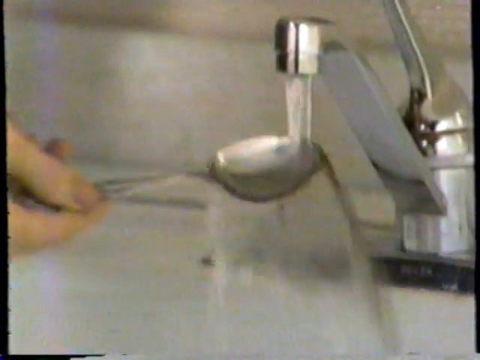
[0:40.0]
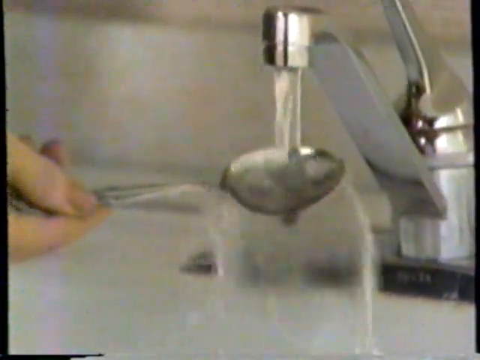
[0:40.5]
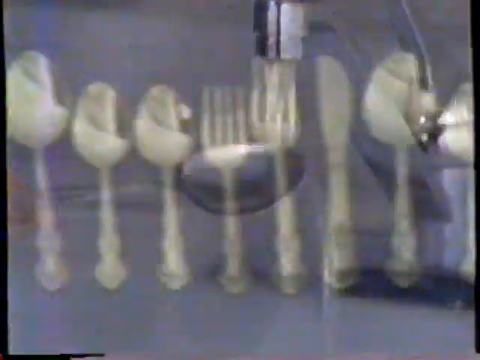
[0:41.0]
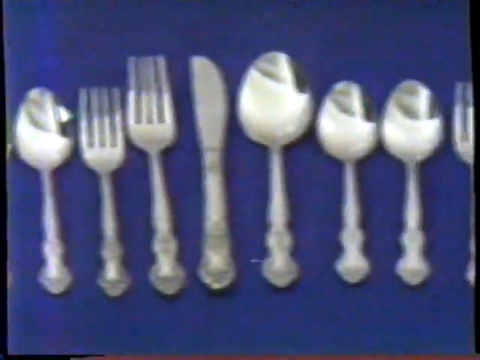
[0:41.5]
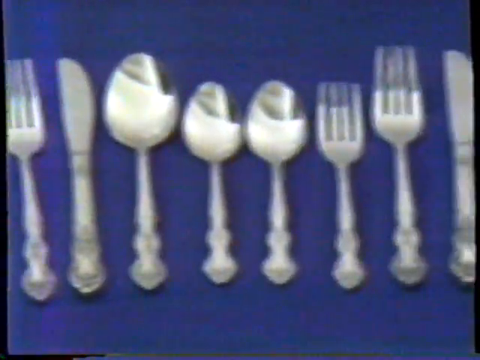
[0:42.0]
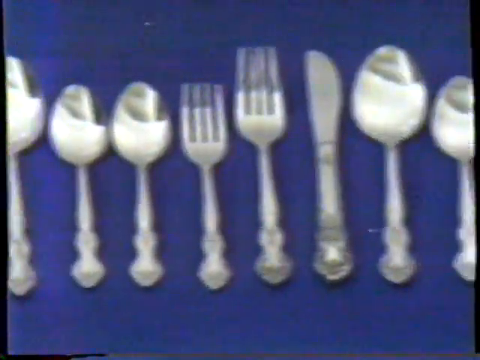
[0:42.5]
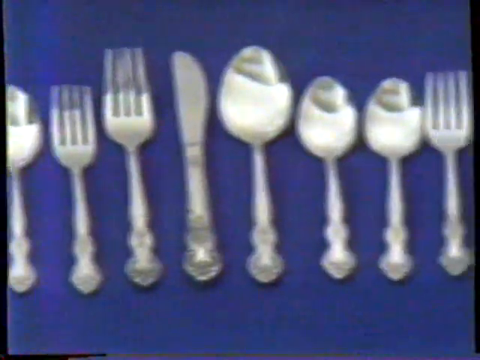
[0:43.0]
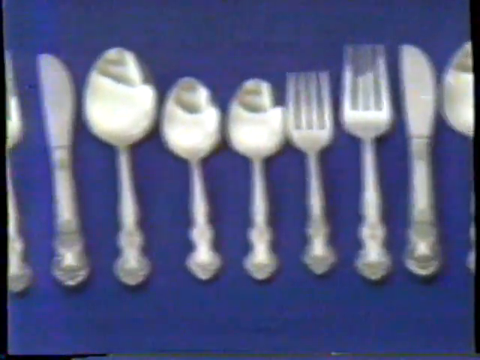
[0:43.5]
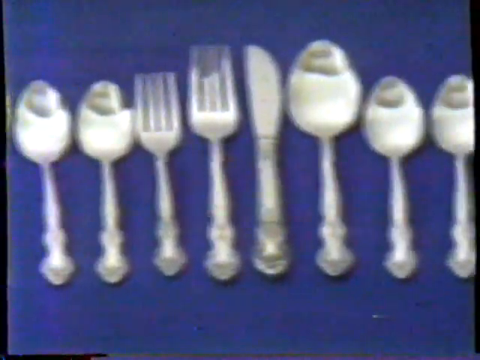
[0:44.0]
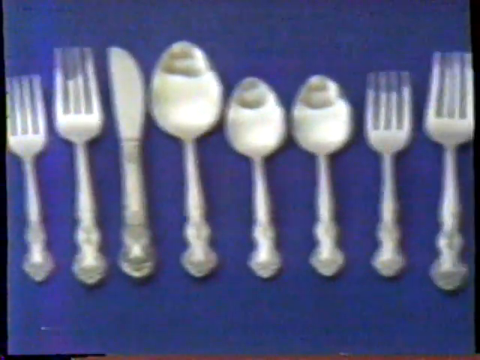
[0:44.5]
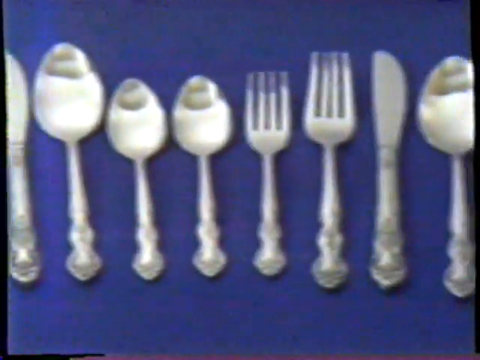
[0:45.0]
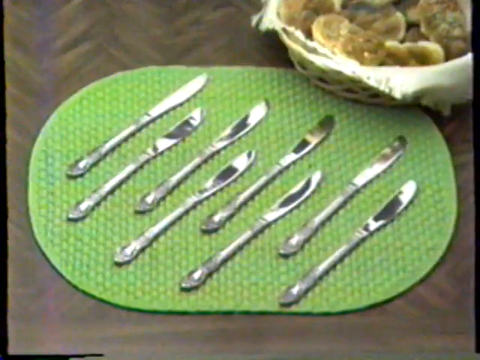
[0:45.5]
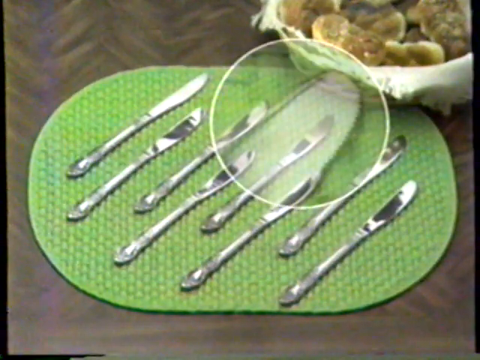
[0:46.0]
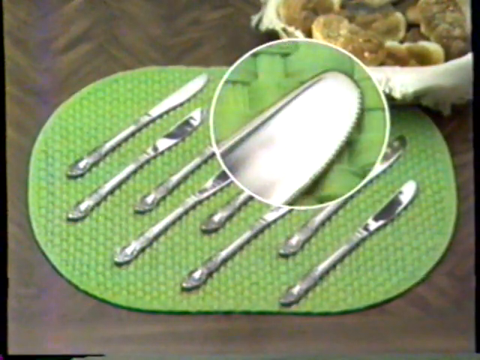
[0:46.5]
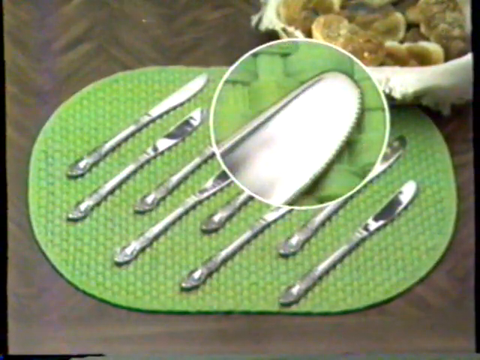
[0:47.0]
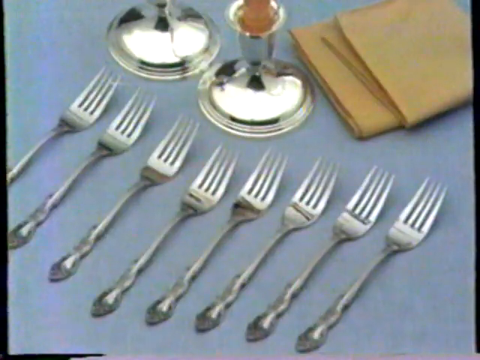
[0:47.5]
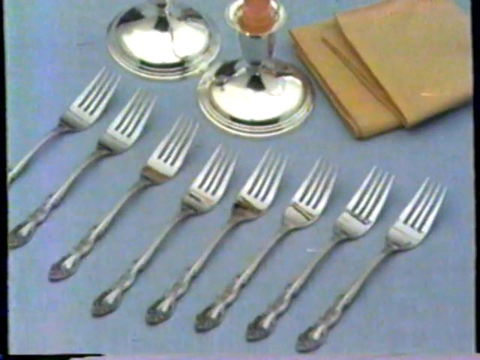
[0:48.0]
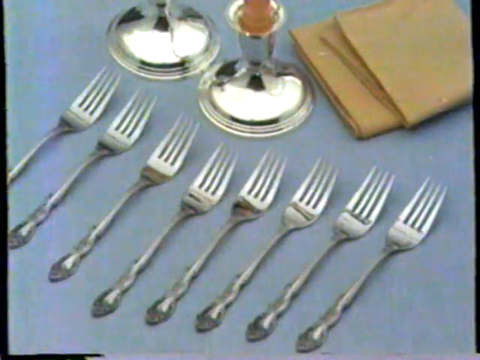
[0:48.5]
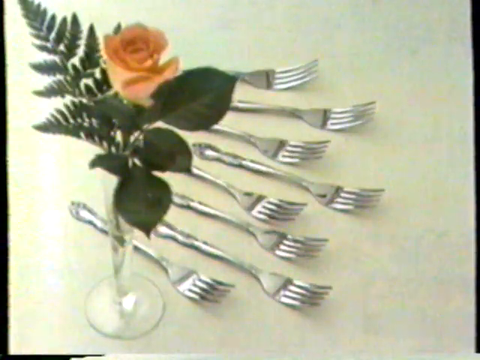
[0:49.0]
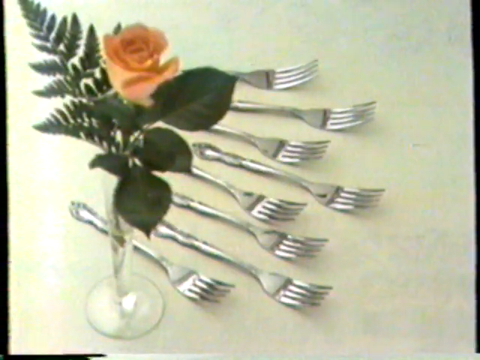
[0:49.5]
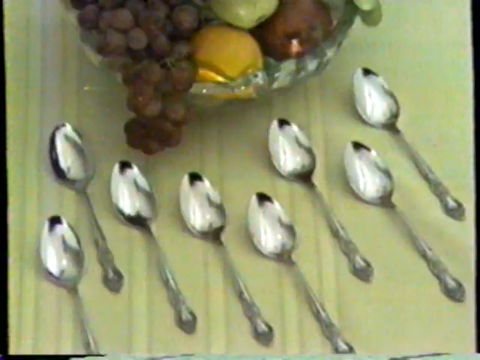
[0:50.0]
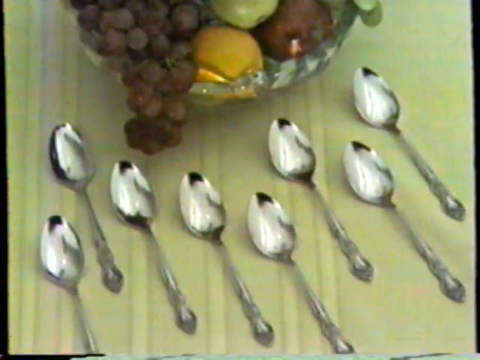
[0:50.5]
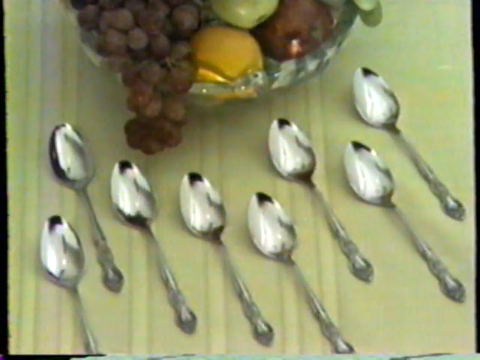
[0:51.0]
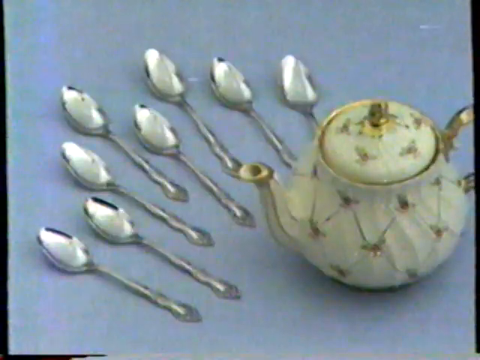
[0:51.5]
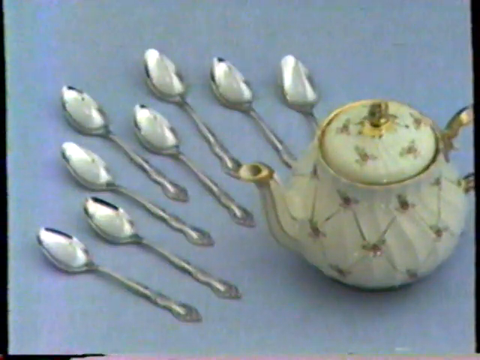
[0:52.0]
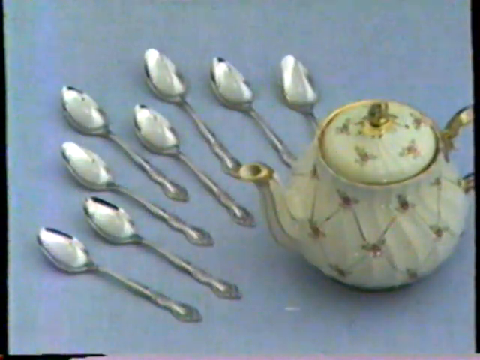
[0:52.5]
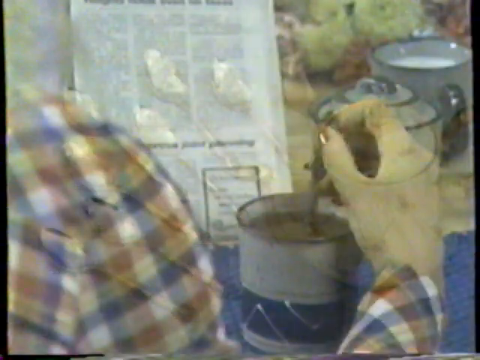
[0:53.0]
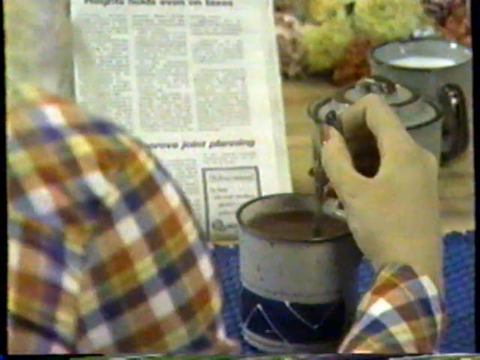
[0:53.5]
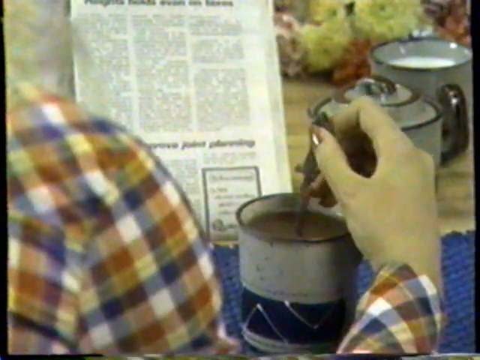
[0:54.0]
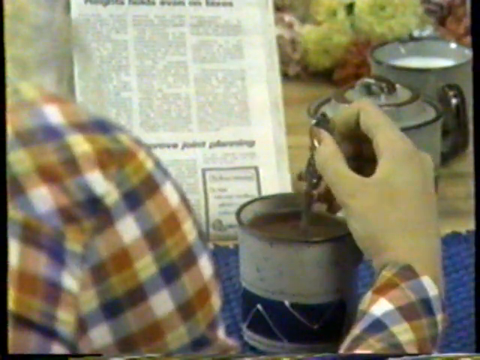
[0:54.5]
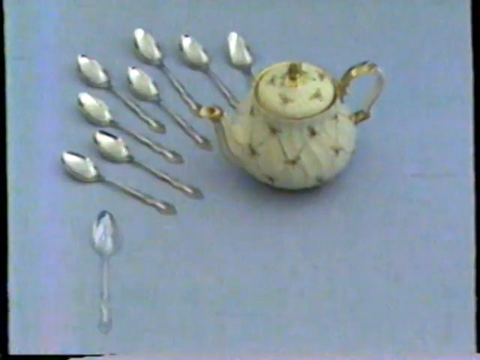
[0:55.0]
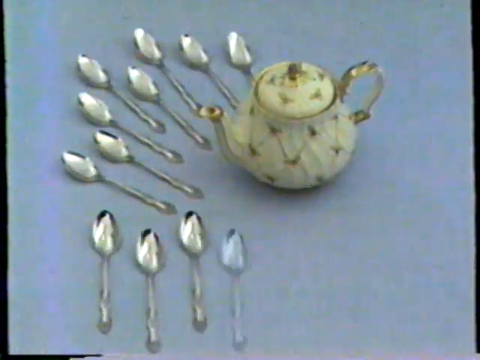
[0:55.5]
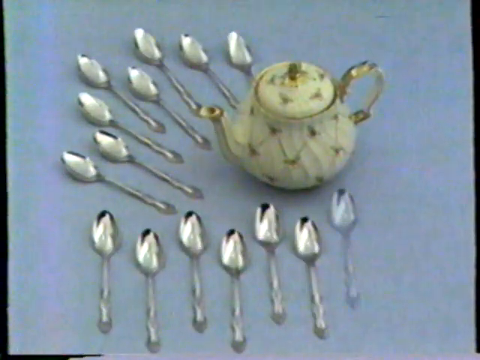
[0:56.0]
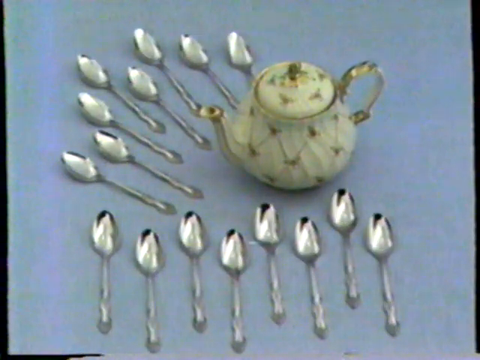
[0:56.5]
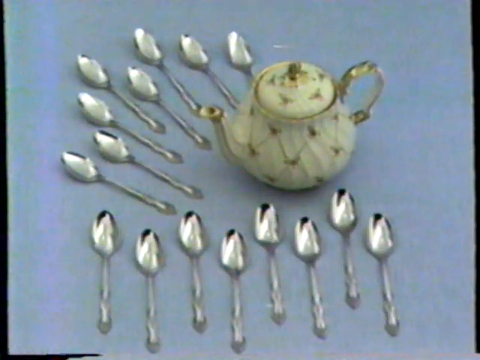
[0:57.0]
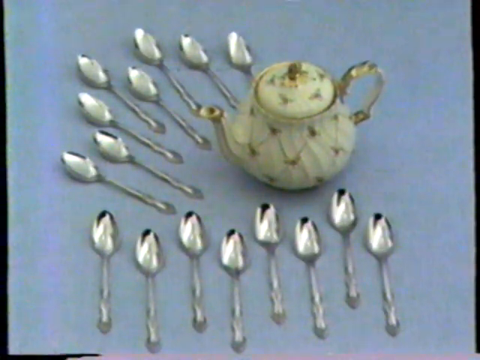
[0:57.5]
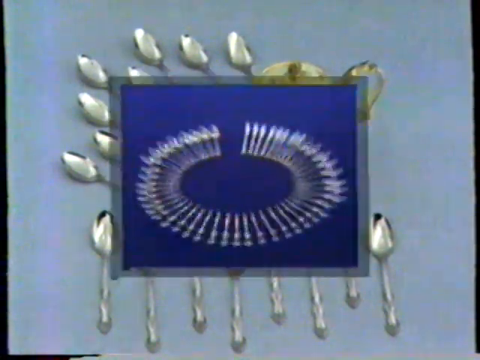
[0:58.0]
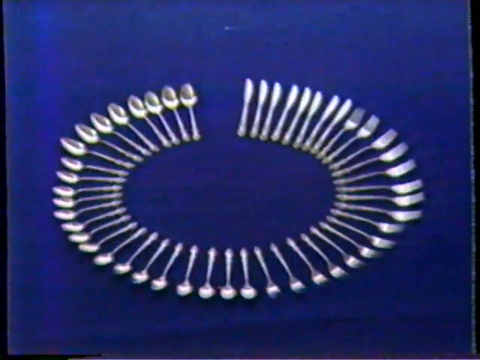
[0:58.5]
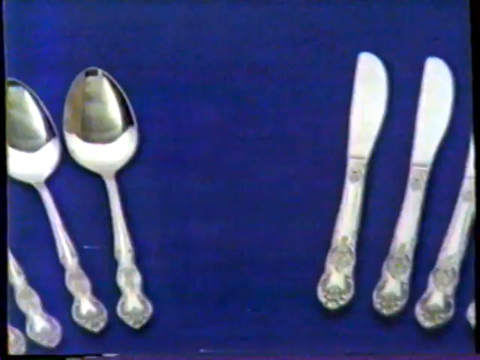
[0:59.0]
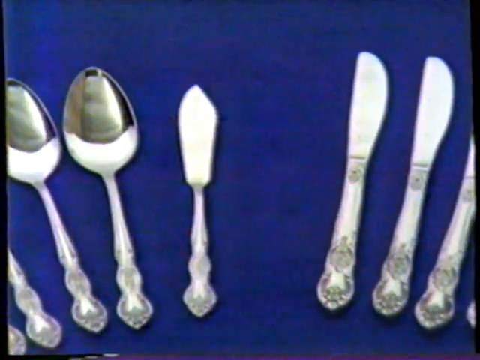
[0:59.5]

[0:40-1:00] A larger set of the same cutlery, with some extra spoons and forks, scrolls to the right, showing it to be a very large set. The scene transitions to a row of ten or so knives from the set on a green silicon mat next to a basket of some sort of food, as a circle appears on screen magnifying the blade to show that the edges are serrated. It cuts to a row of forks on a blue tablecloth, then the same forks on a white tablecloth, then a set of ten spoons on a wooden table next to a bowl of fruit. The same set of spoons is then on a blue tablecloth next to a fancy teapot with gold trimming, and a woman stirs her cup of coffee with one of the spoons as she reads the newspaper. The video returns to the spoons next to the teapot on the blue tablecloth as extra spoons appear one by one at the bottom. A blue transition grows into frame, and on a darker blue background probably 50 or so pieces of cutlery, ranging from knives to forks to spoons, are spread out in a circle. The view zooms into a blank spot where a smaller cheese-knife-style piece of cutlery appears out of nowhere.